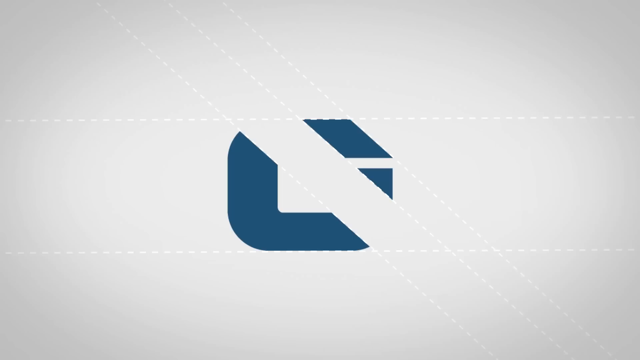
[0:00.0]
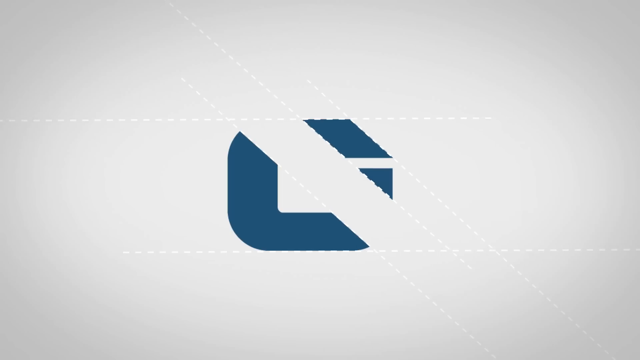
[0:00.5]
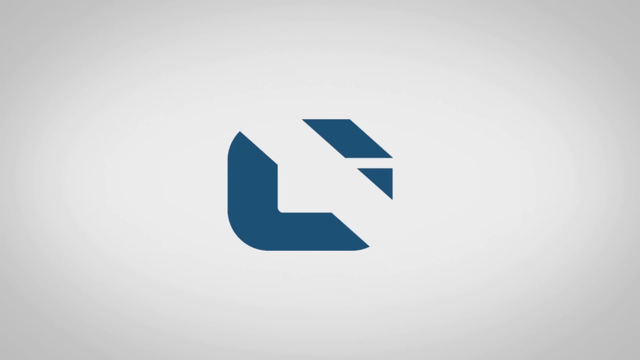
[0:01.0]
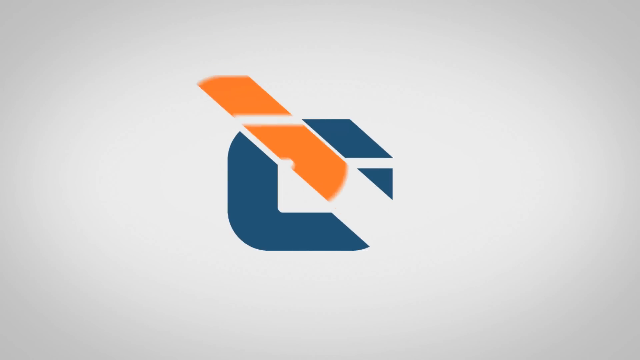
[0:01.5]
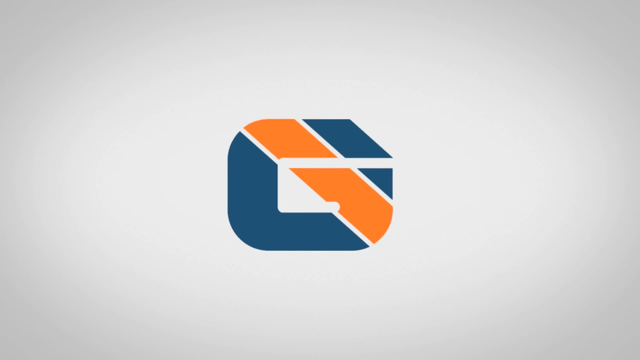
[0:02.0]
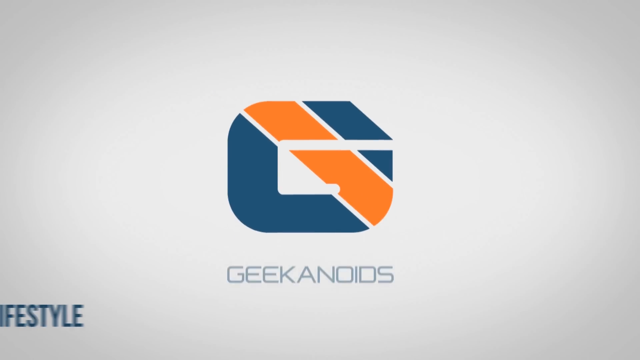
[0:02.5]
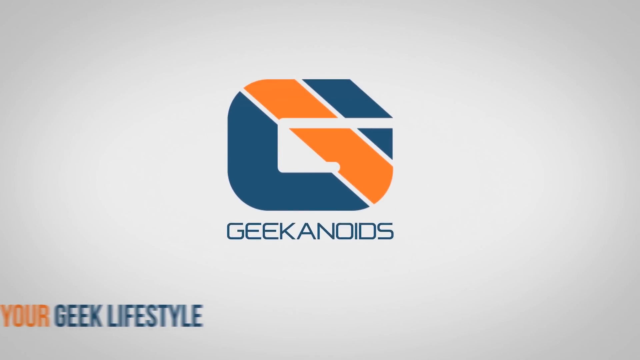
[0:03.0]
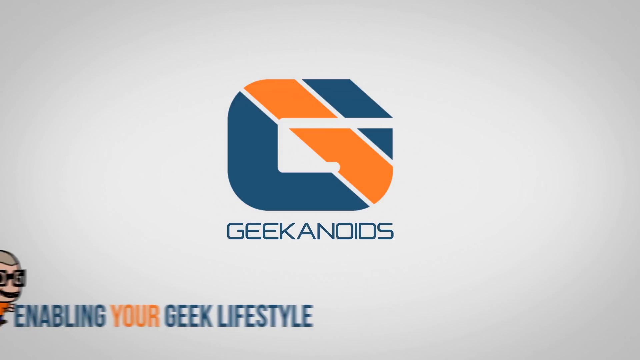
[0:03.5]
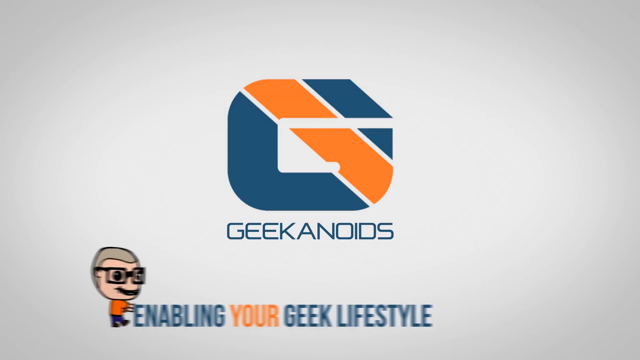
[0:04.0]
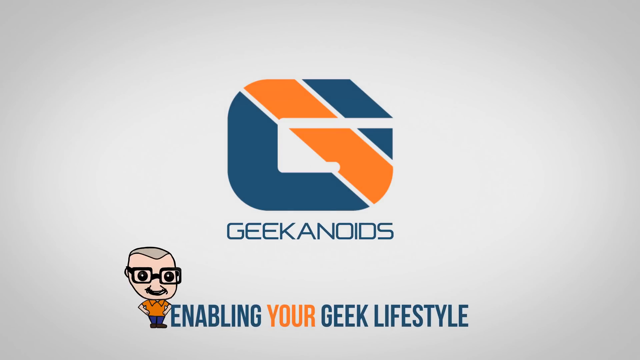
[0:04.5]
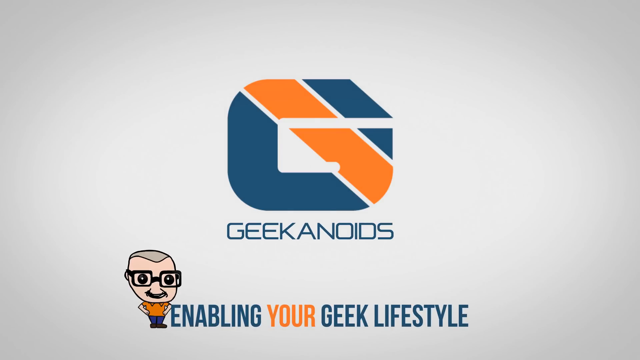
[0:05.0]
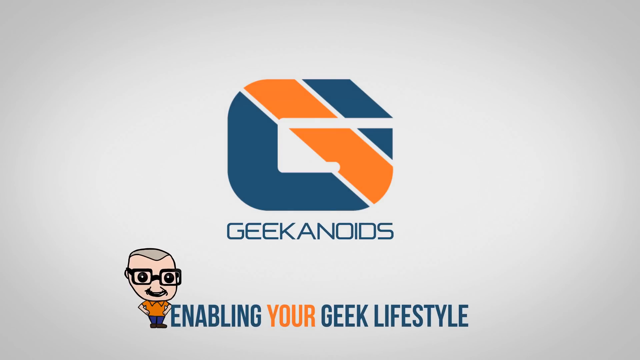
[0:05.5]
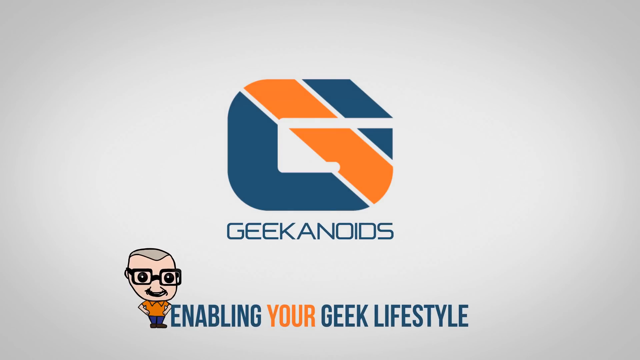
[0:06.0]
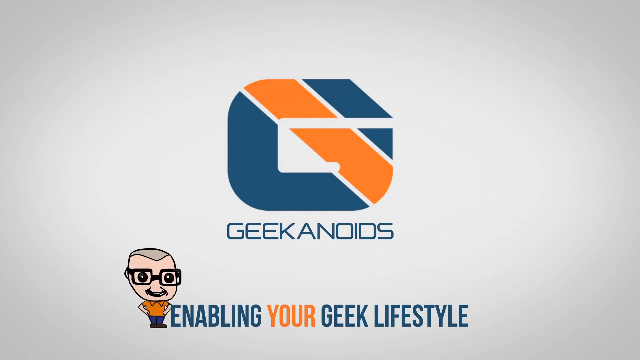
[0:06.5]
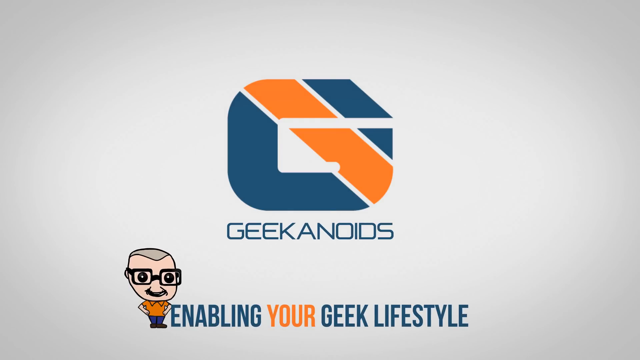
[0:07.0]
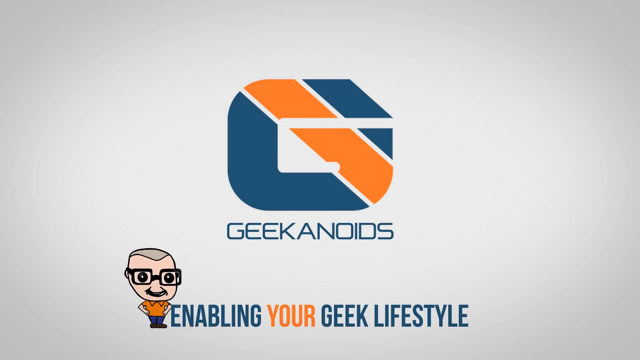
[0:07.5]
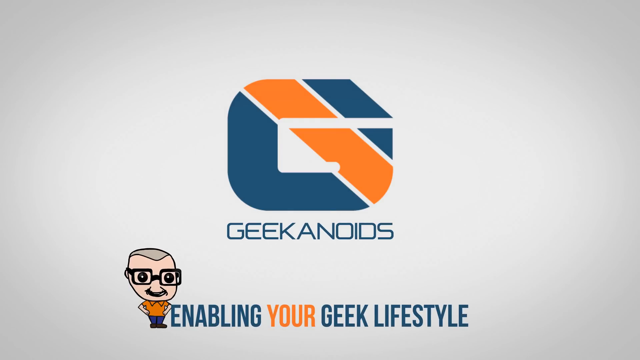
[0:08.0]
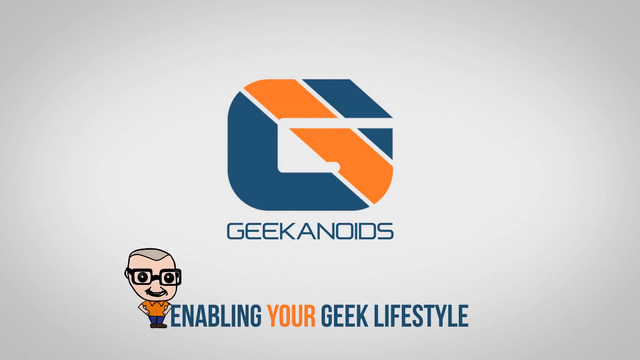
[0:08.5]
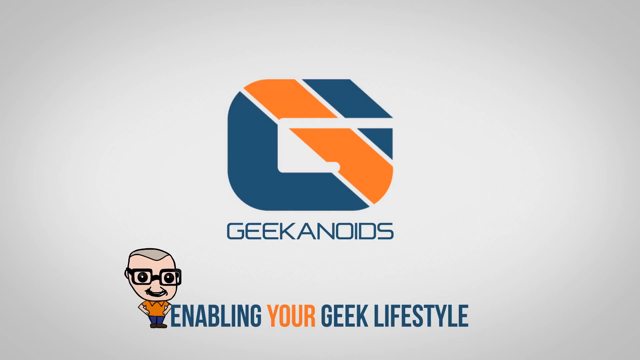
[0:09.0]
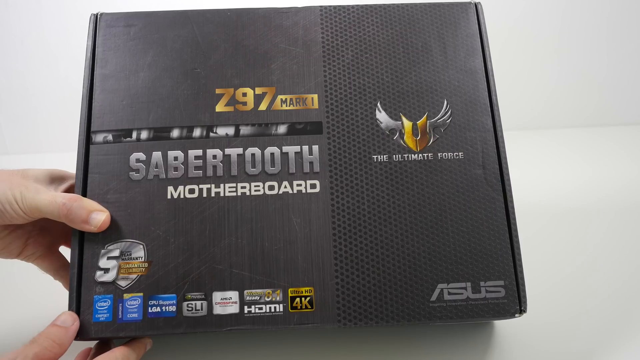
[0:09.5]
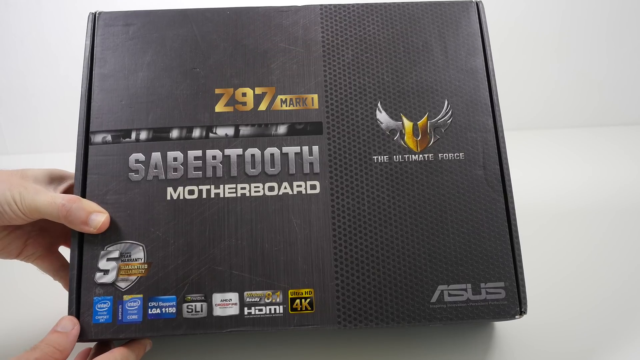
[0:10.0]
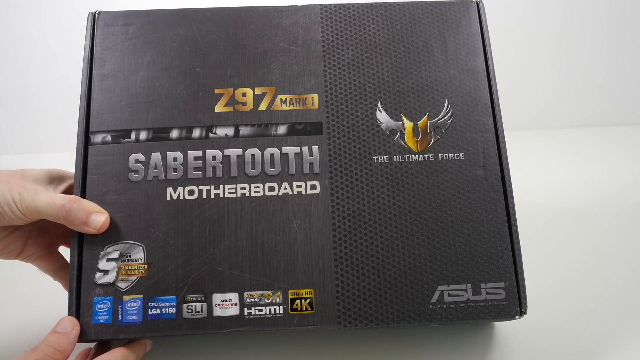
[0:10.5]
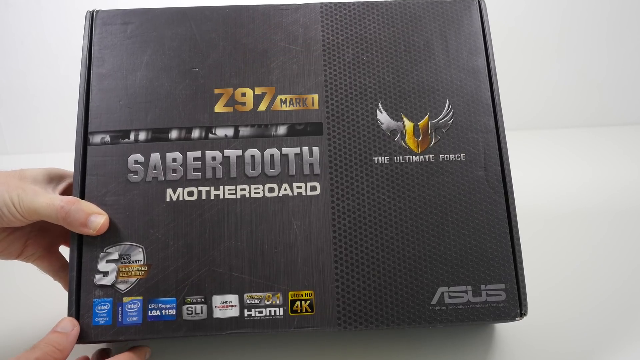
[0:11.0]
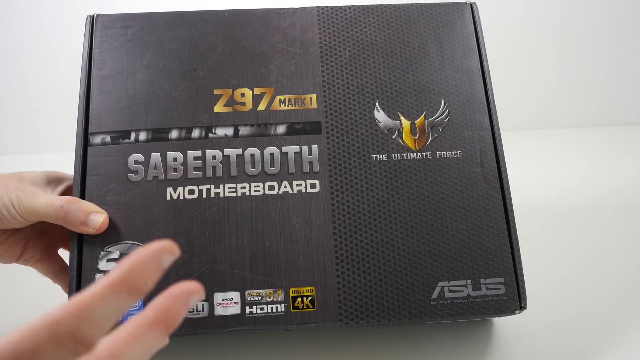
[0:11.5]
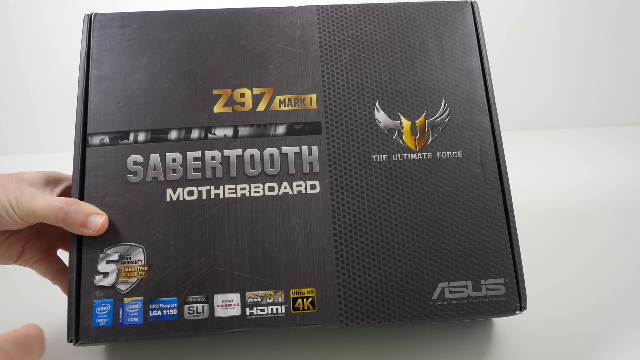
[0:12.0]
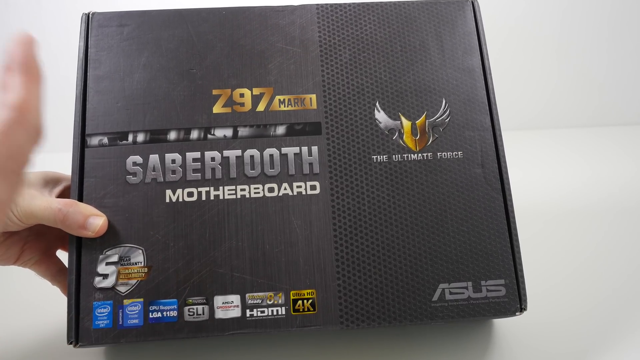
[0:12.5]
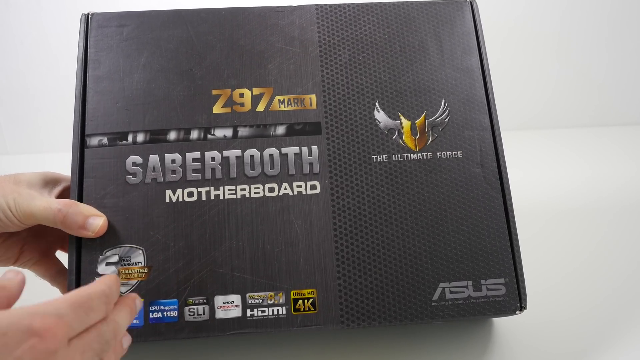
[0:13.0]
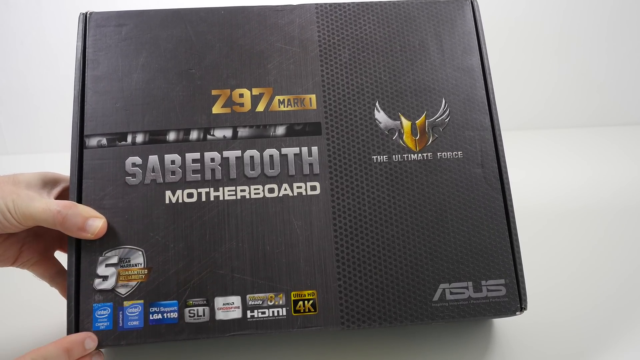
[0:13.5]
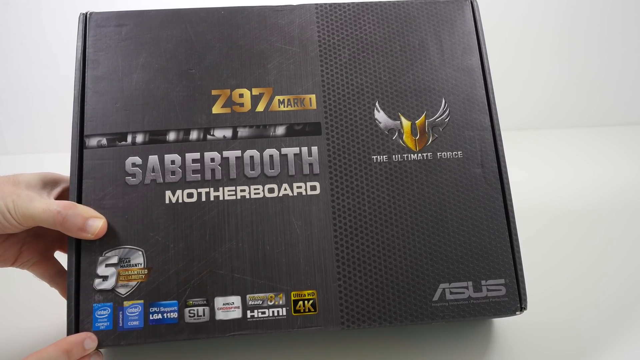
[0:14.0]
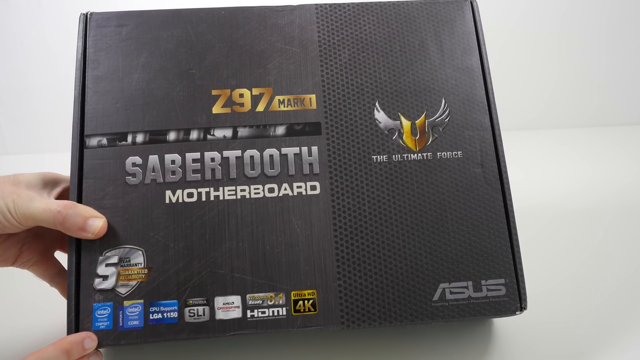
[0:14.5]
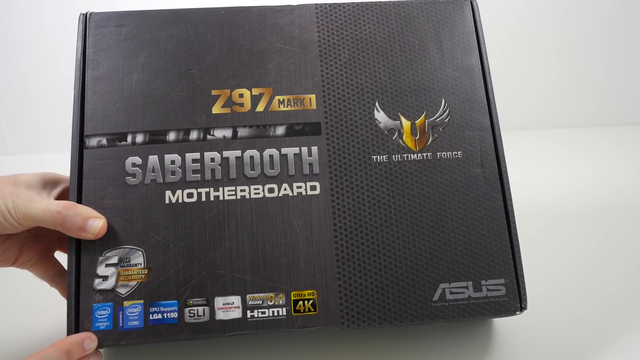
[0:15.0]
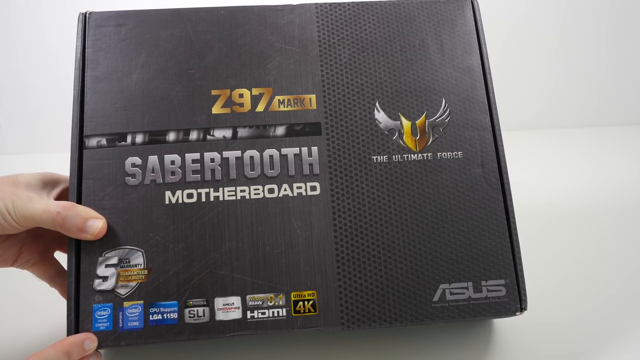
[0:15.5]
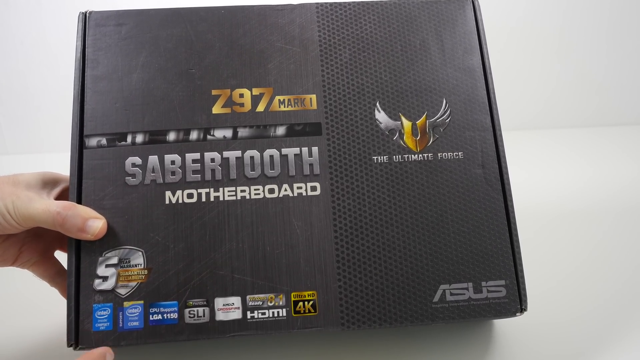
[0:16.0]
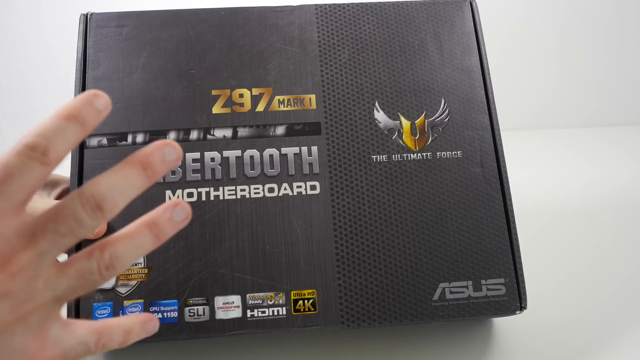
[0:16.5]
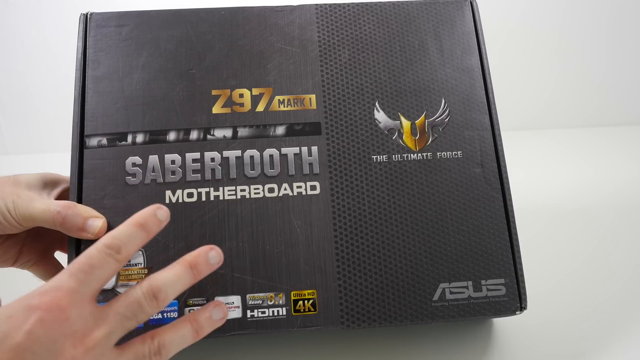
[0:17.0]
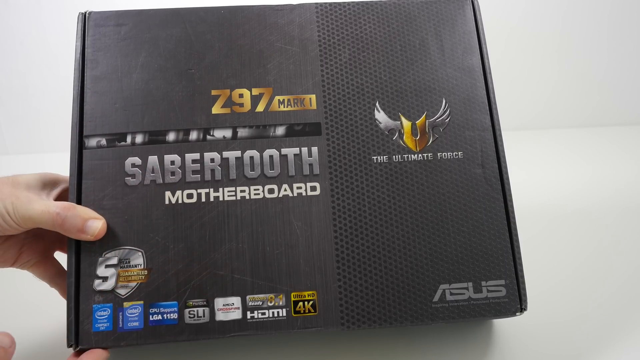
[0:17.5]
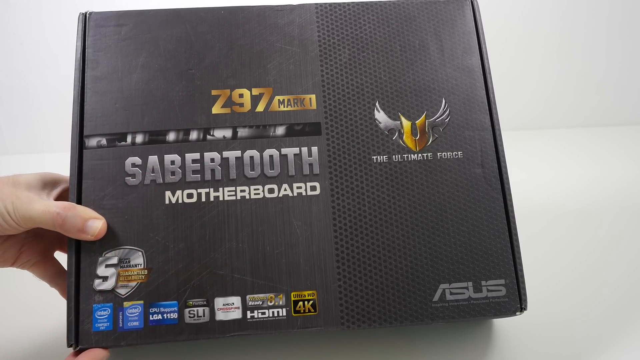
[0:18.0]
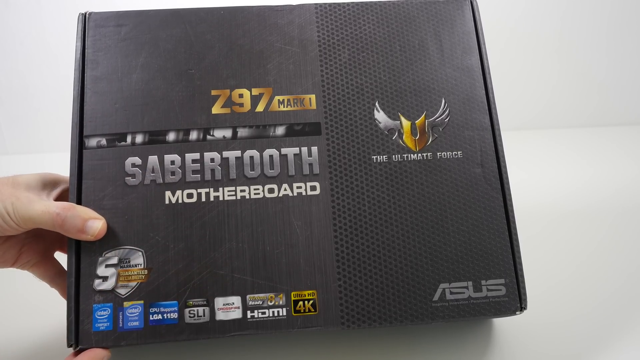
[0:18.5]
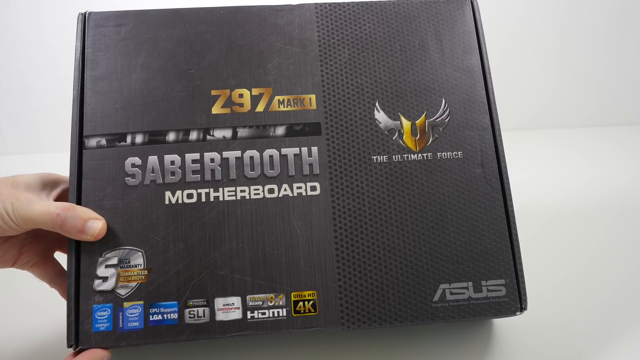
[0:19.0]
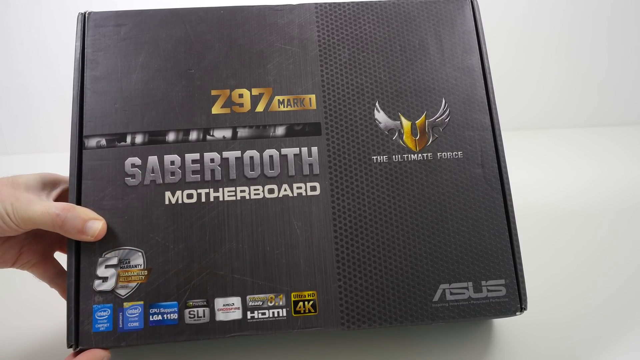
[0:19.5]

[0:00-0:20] A light gray background appears with a three-part dark blue icon. An orange component then slides into position from the top left-hand corner of the screen at a 45-degree angle, forming a G design with geometric lines, and the Geekanoids logo rises from the bottom of the screen in thin capital letters. Next, a slogan with a caricature of a man with white, balding hair and large square-framed glasses, wearing an orange shirt and blue pants, fades into view, swiping in from the left-hand side of the screen; it reads "enabling your geek lifestyle". "Enabling", "geek" and "lifestyle" are in bold, dark blue capital letters, while "your" is in orange. The caricature's head bobbles slightly before the screen changes to a video of a person with a white left hand in the frame holding a box for an ASUS Z97 Mark I Sabertooth motherboard. The box has multiple stickers in its bottom left corner indicating compatibility with HDMI, 4K and Intel chips. The ASUS logo, a gold U with silver wings, is visible, with "the ultimate force" on the right-hand side. The person's right hand makes emphasizing gestures from the bottom left-hand corner of the screen.